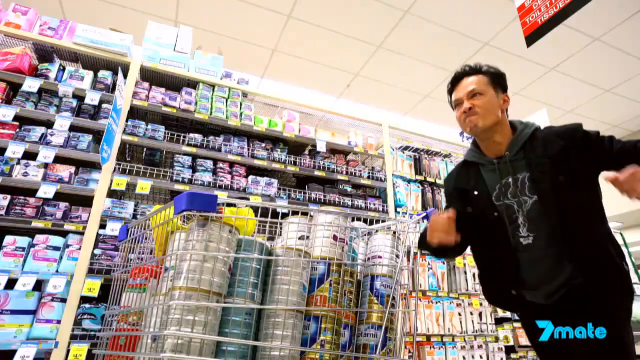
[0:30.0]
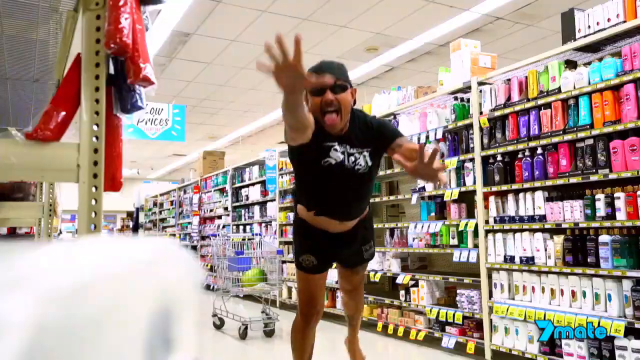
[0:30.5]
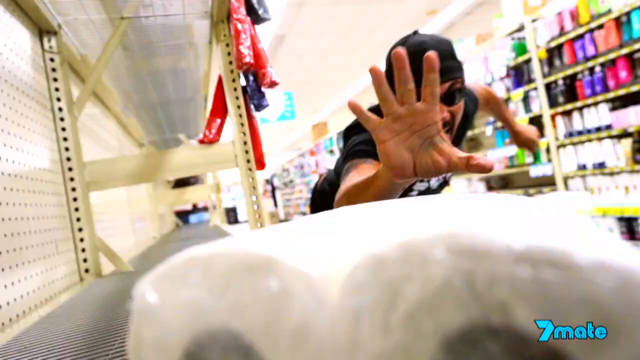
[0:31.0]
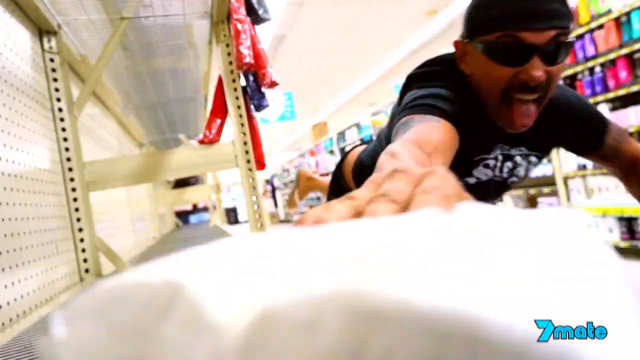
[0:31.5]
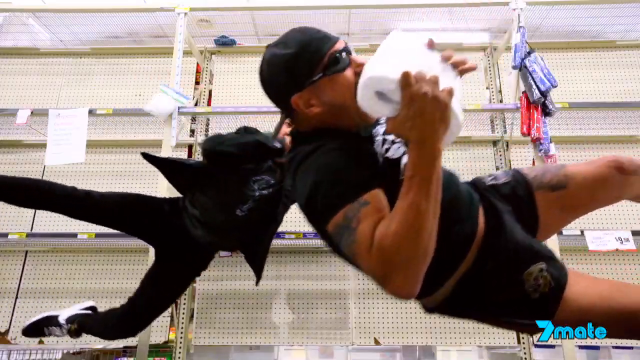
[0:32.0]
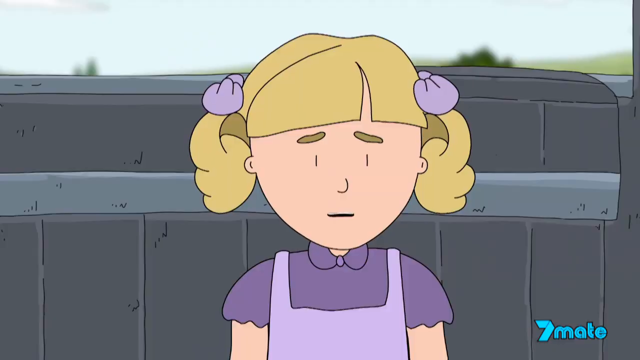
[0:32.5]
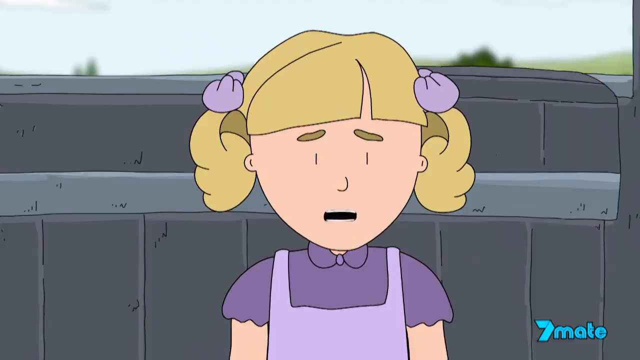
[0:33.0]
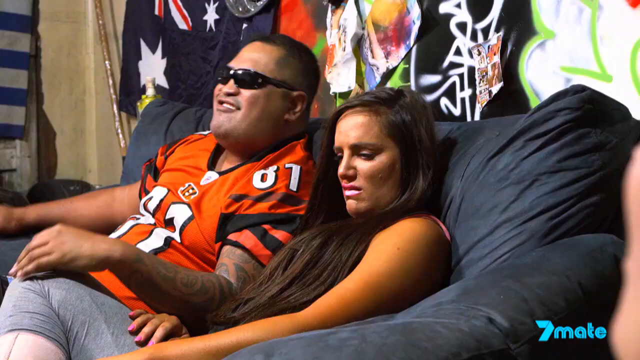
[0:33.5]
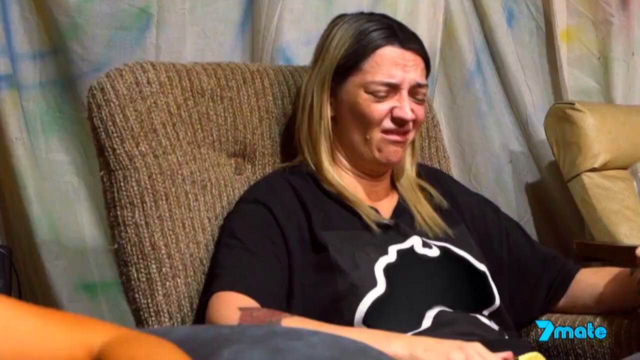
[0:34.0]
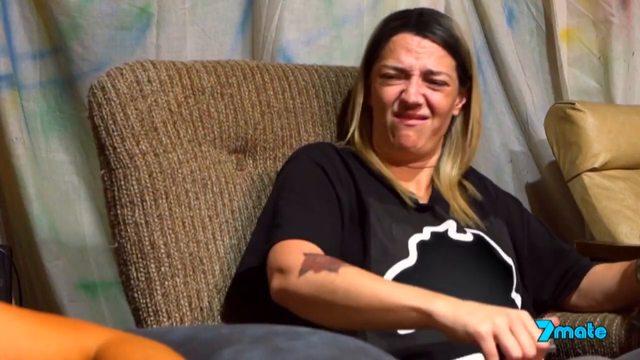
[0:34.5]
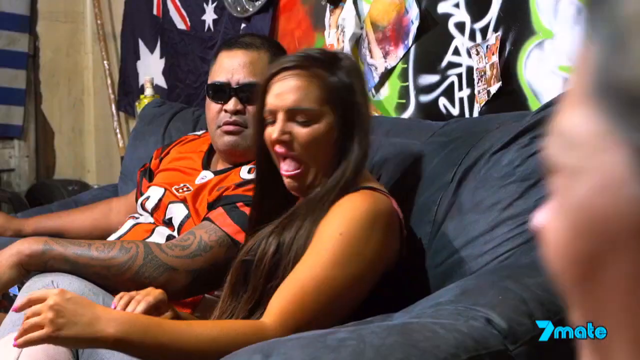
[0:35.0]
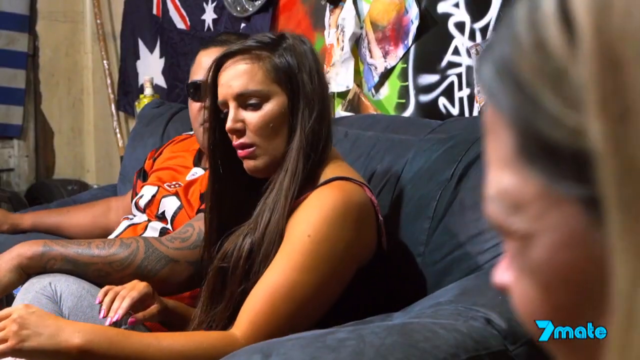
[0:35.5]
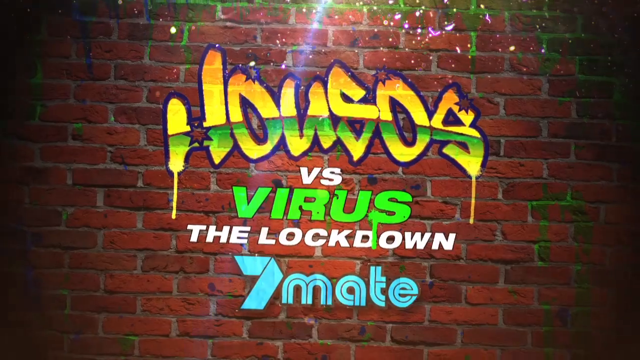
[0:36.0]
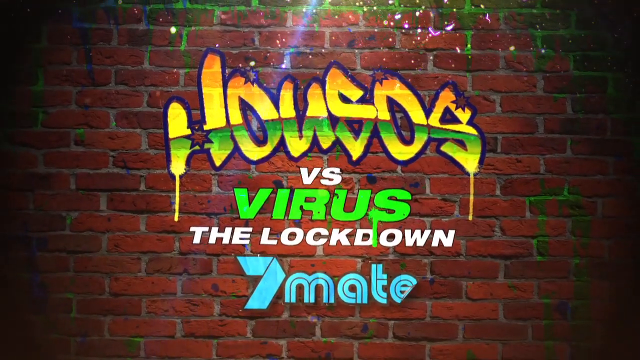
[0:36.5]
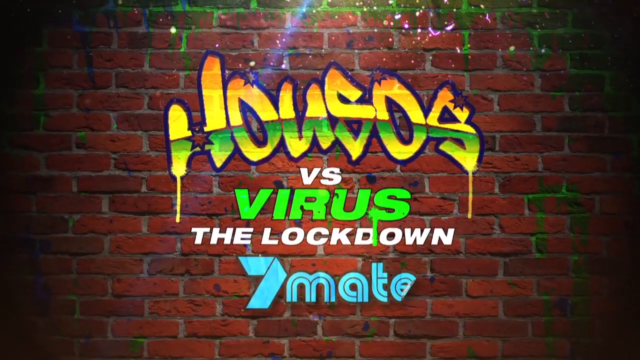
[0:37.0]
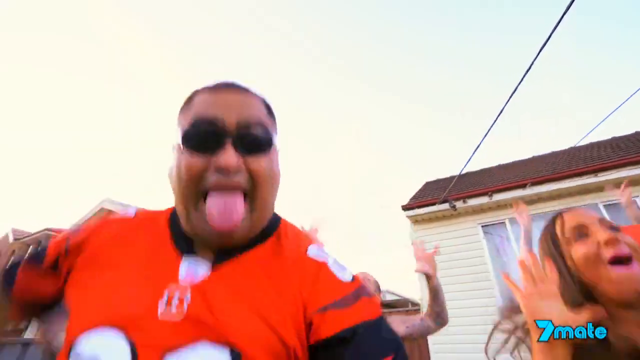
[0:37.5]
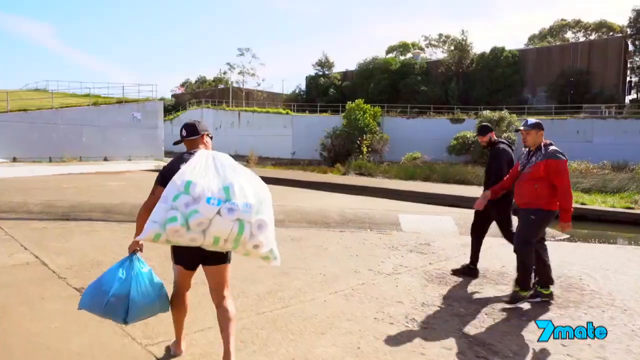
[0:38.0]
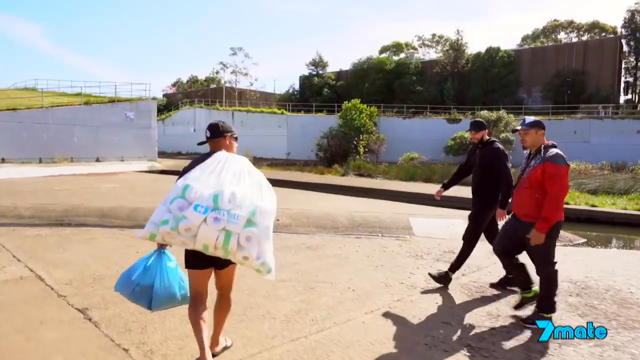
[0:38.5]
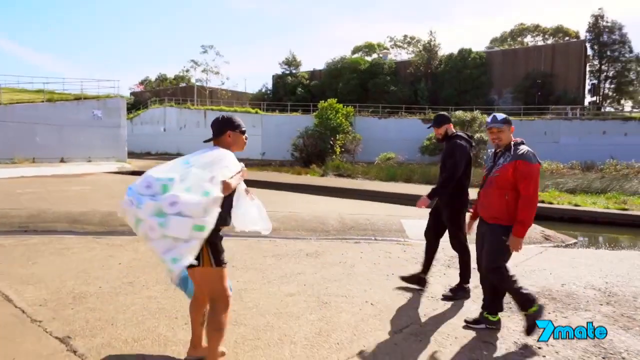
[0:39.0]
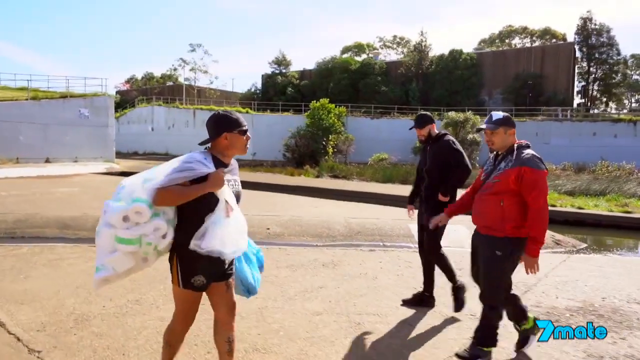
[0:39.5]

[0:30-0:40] The two men continue racing for the lone package of toilet paper. Both jump for it, and the man from the first scene grabs it, falling to the ground. The video flashes to a woman in a lawn chair and the man in the jersey; they are all sitting on a couch, with multiple flags, not of states but of different things, hanging on the back wall. They look like they are talking and making faces. A screen then shows the title "Housos Versus Virus The Lockdown" with "seven mate" underneath. Next is an outdoor scene that looks like a parking lot, where a man walks with what looks like toilet paper and a bag over his left shoulder and a blue bag hanging from his left hand, as two guys walk toward him.